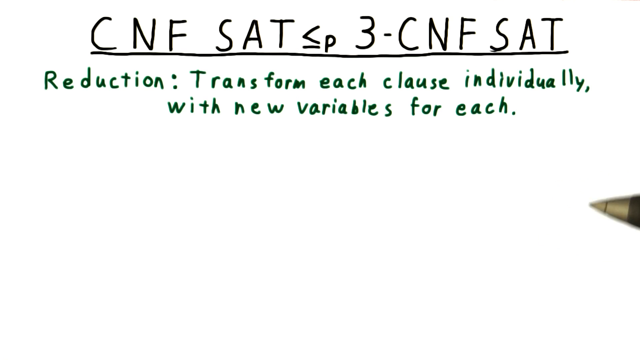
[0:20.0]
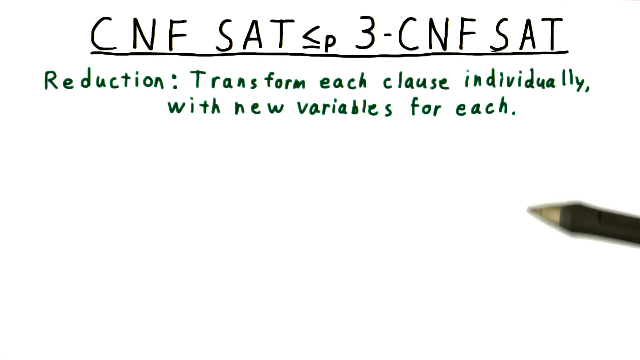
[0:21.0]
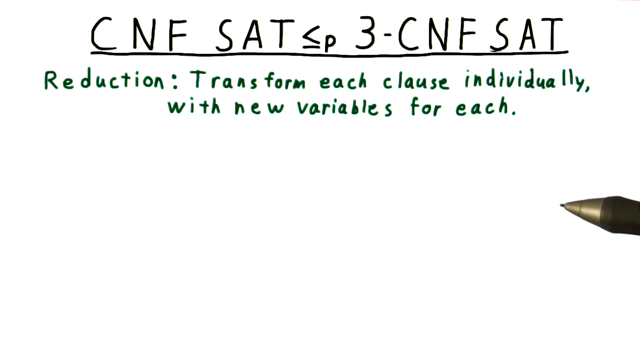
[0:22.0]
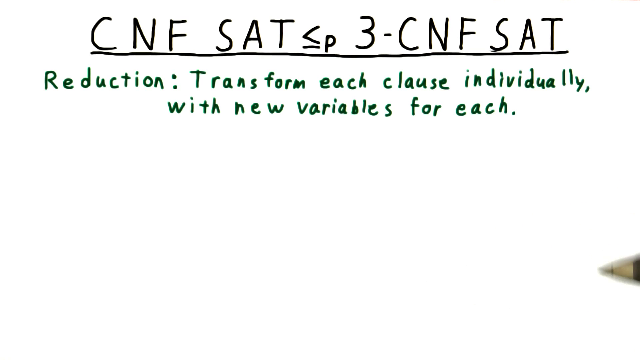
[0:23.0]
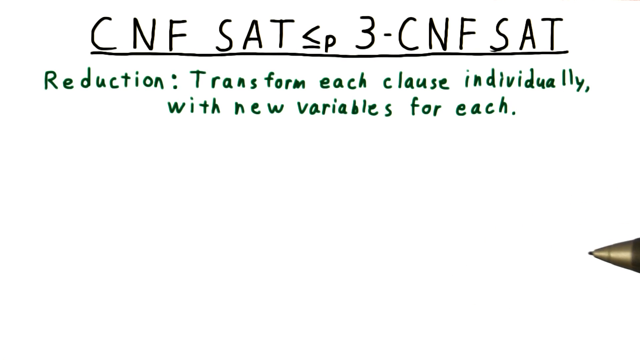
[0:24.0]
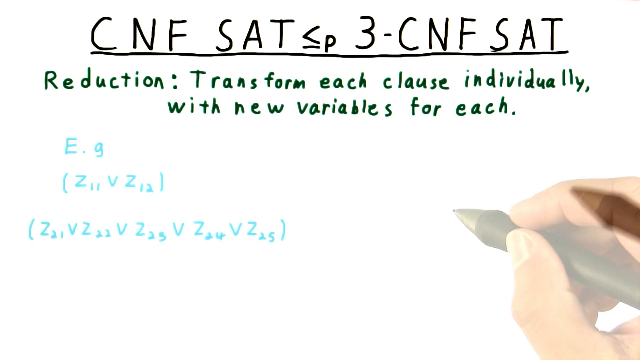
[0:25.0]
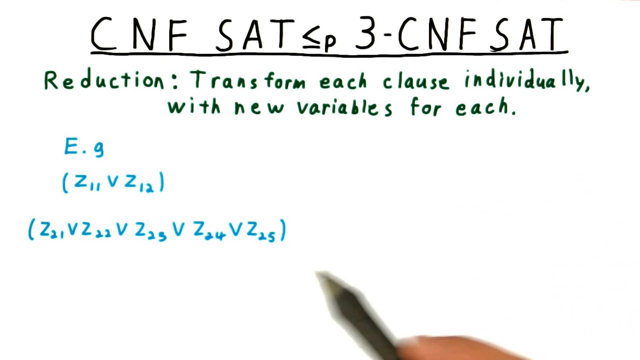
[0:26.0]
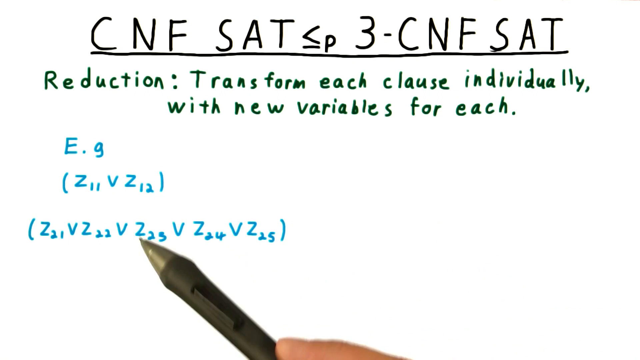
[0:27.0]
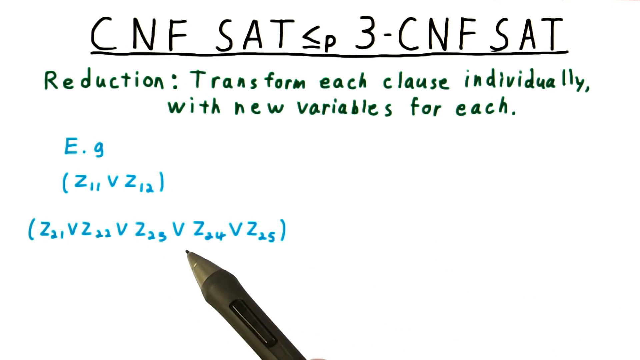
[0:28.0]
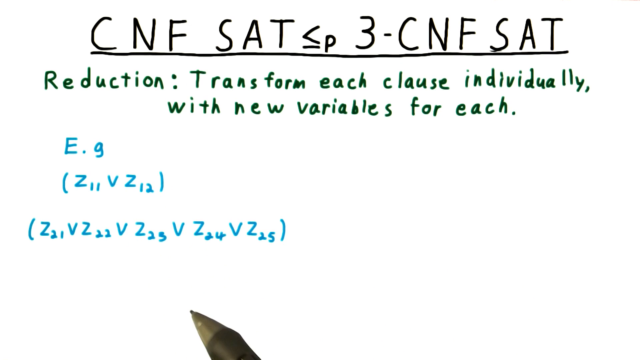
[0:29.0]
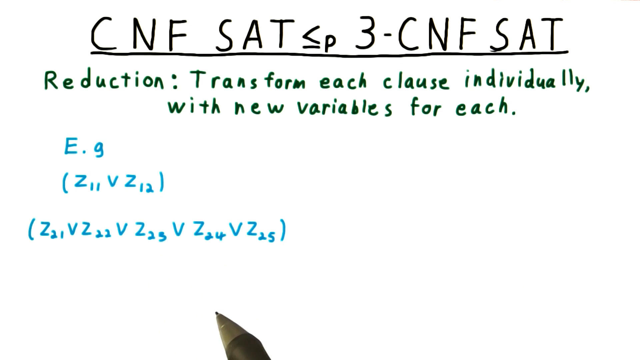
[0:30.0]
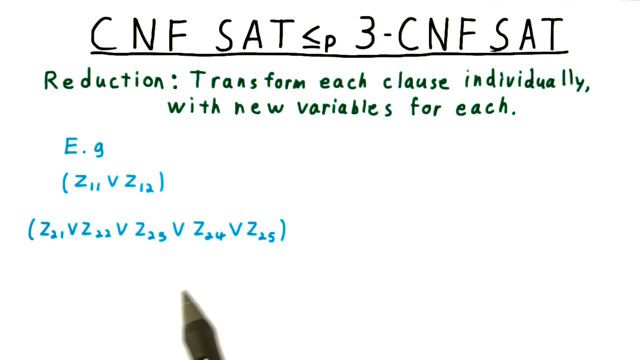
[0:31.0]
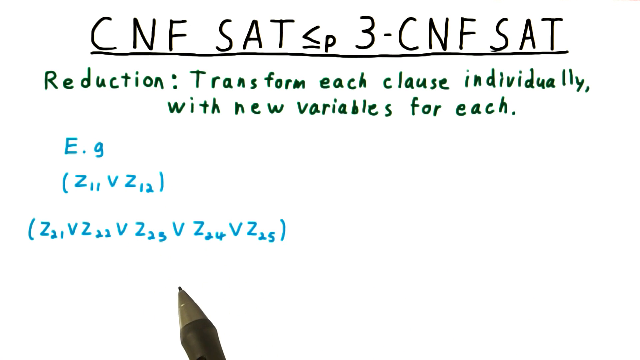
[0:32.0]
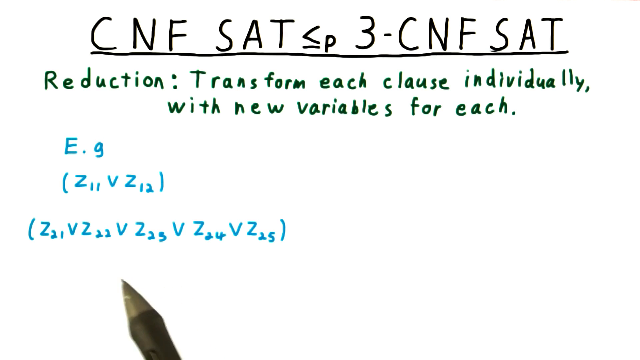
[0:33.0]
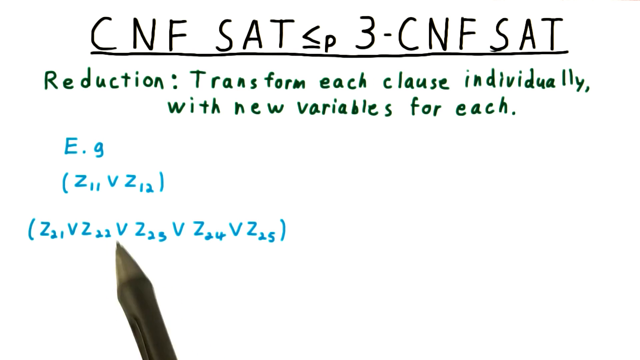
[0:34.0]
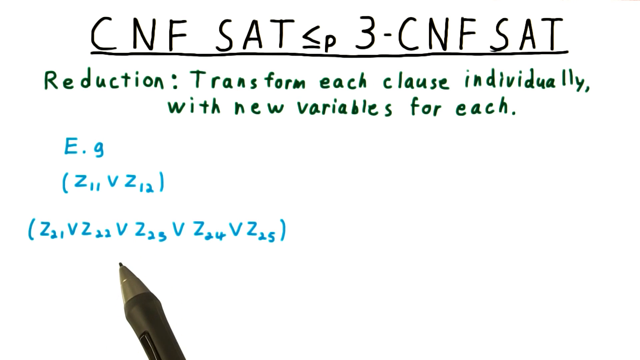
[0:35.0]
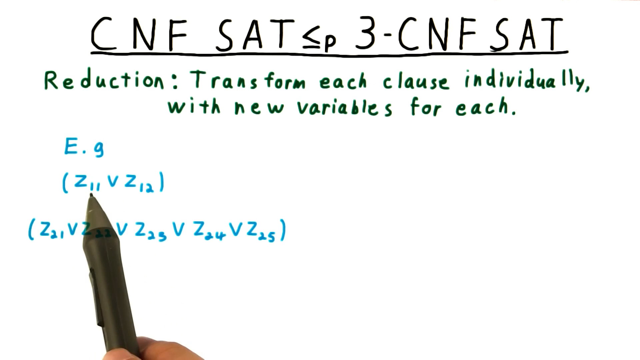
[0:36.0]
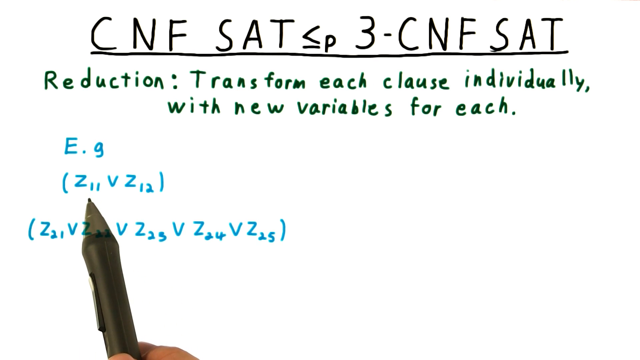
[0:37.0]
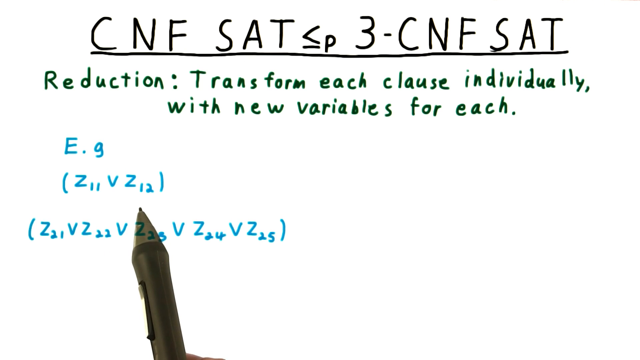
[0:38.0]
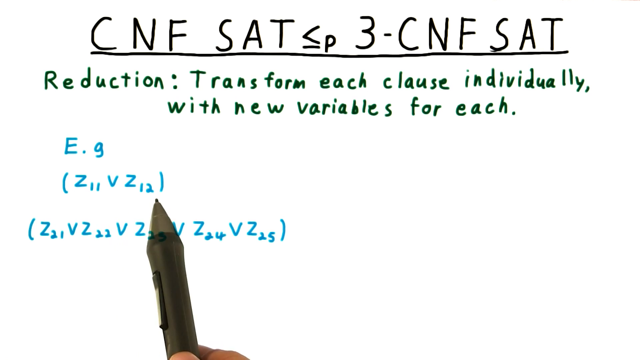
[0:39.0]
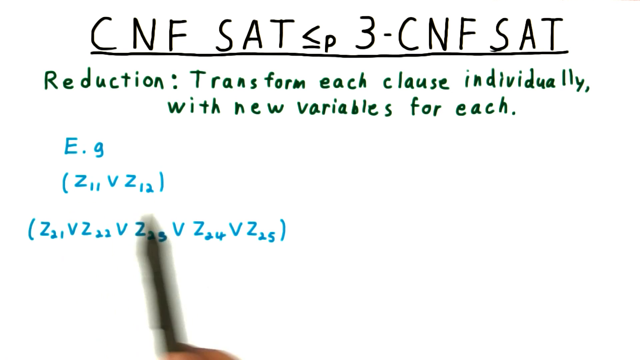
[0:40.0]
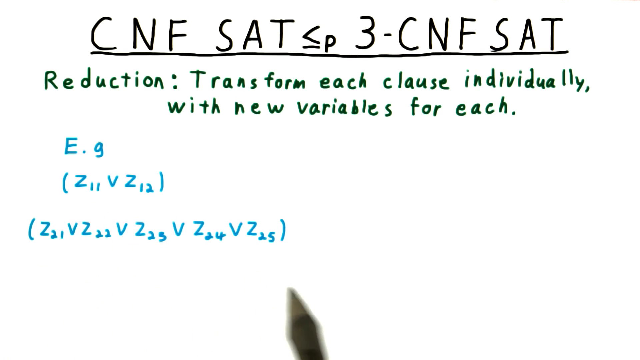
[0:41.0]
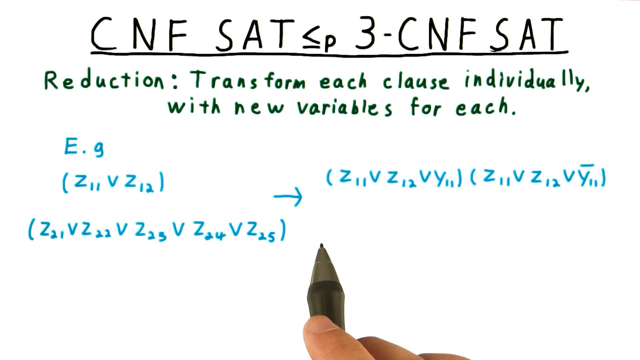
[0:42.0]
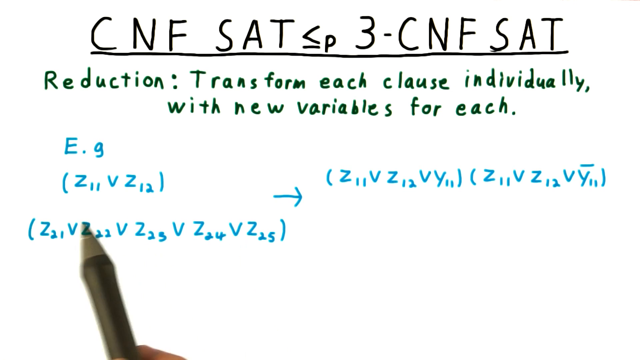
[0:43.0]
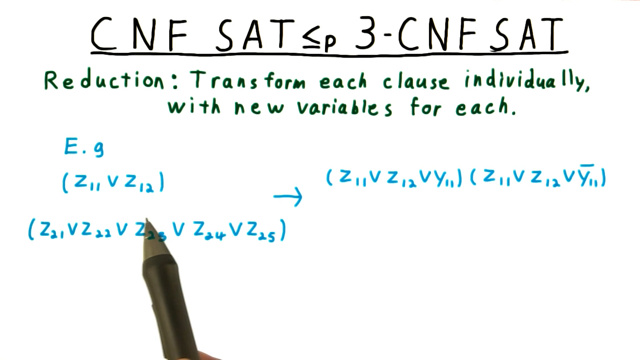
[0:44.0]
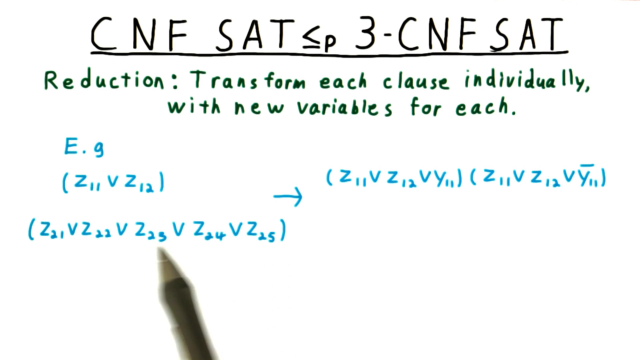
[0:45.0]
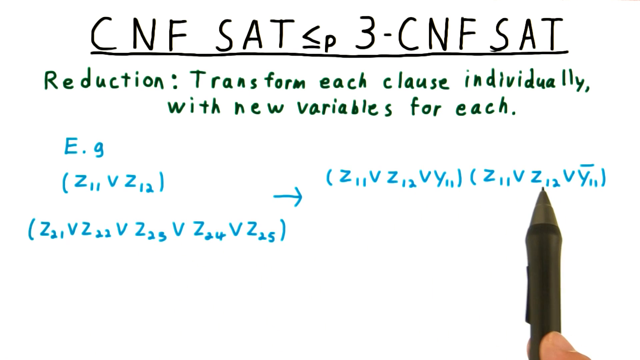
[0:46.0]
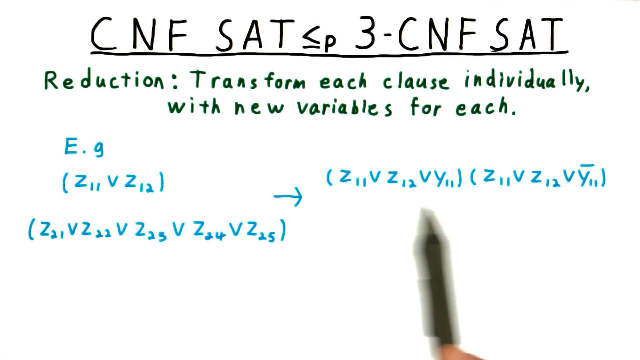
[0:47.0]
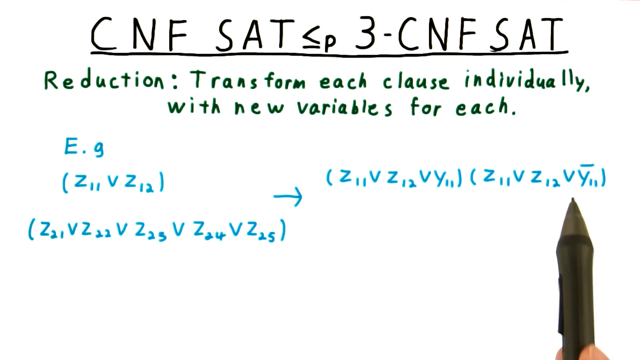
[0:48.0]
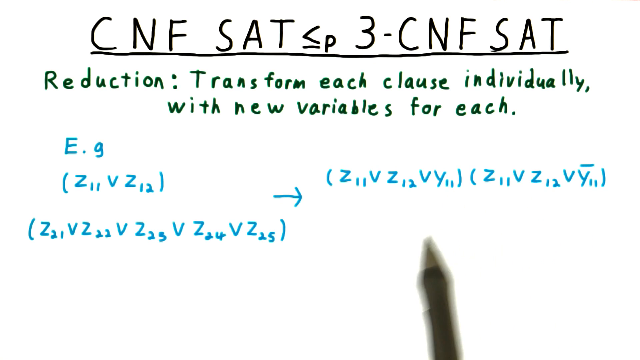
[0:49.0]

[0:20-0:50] The pen continues moving around a little on the right side of the screen, to the right of the green text, which reads "reduction, transform each clause individually with new variables for each." The screen fades and more text appears underneath, this time in blue marker, showing examples of different variables, letters and numbers, and the pen moves toward each of them. After a few seconds an arrow pointing to the right appears, and more letters and variables show up on the right side of the screen. The pen keeps moving around the newly appeared writing, a little shakily; it is a dark beige, slightly army green color.